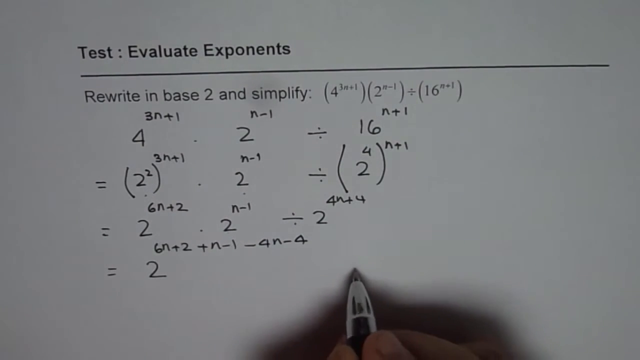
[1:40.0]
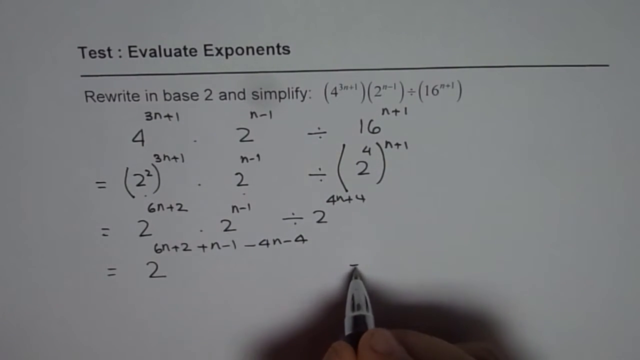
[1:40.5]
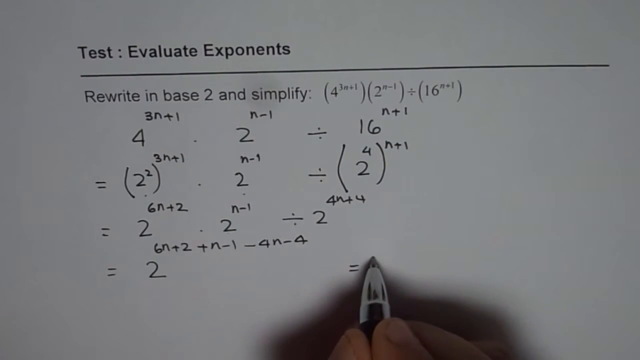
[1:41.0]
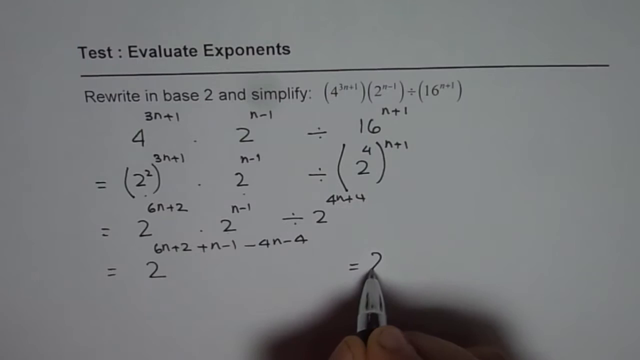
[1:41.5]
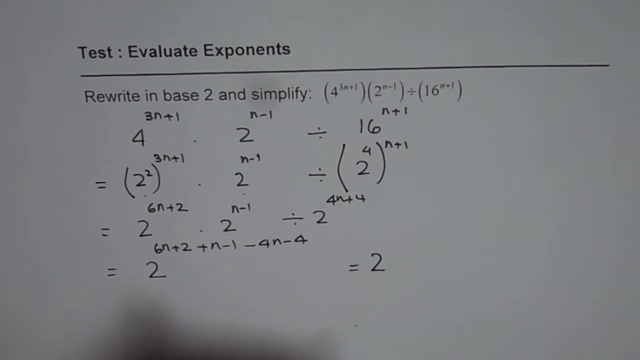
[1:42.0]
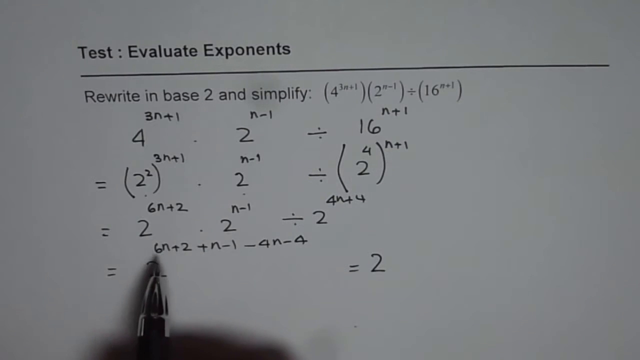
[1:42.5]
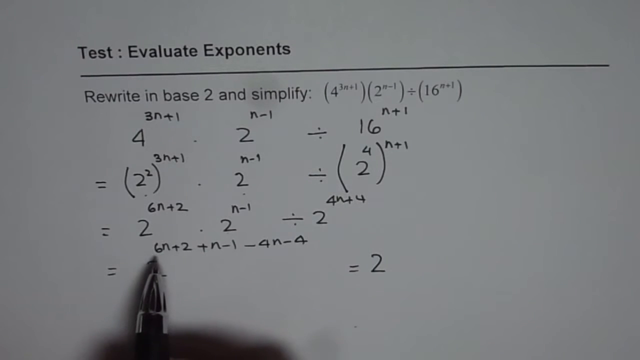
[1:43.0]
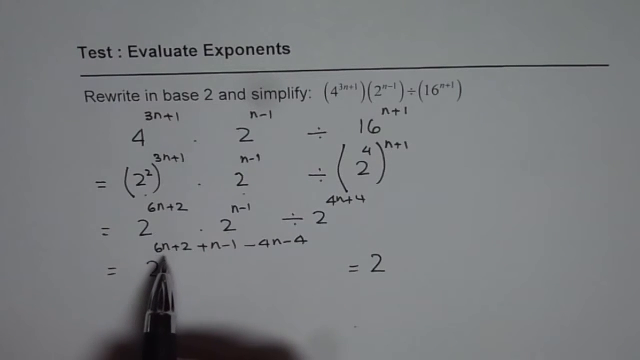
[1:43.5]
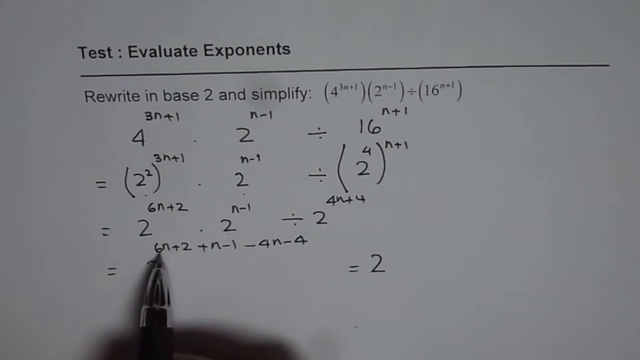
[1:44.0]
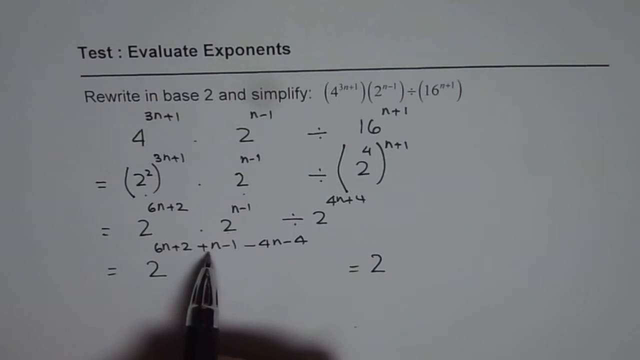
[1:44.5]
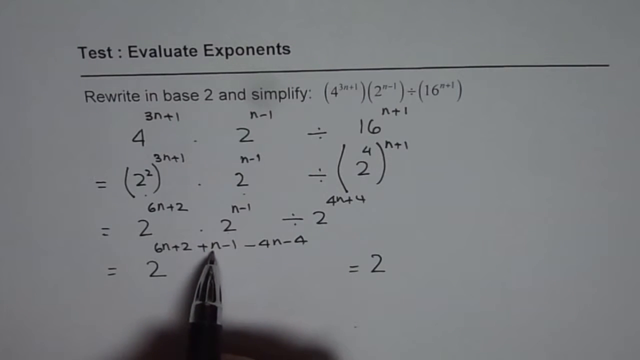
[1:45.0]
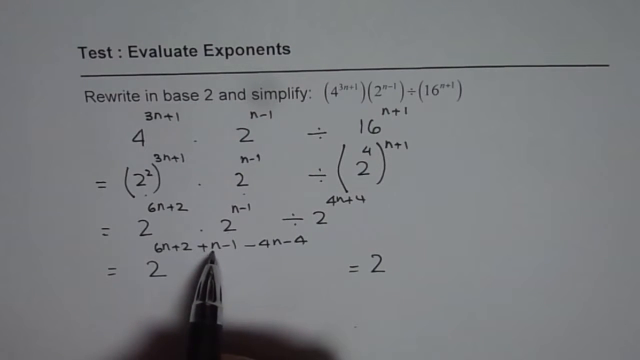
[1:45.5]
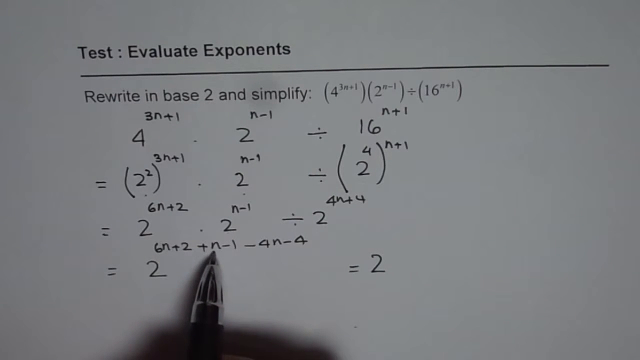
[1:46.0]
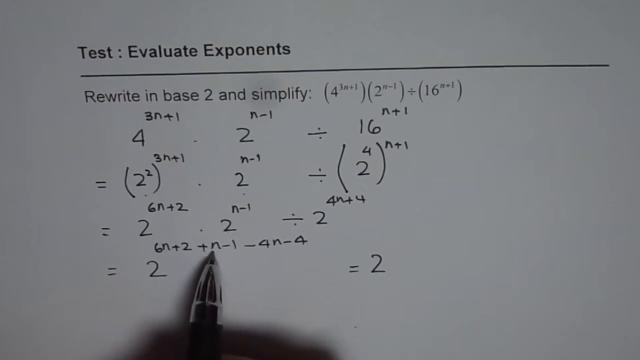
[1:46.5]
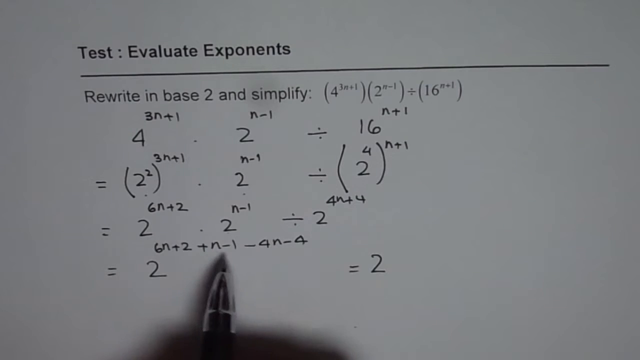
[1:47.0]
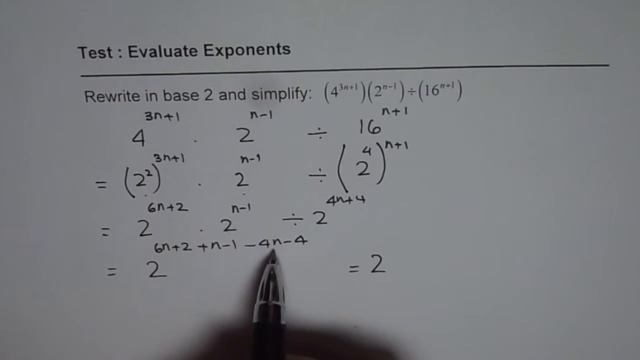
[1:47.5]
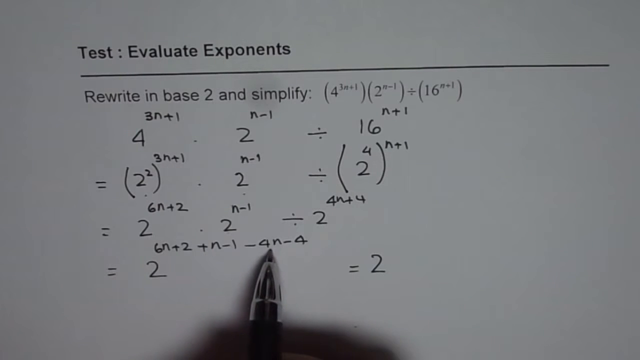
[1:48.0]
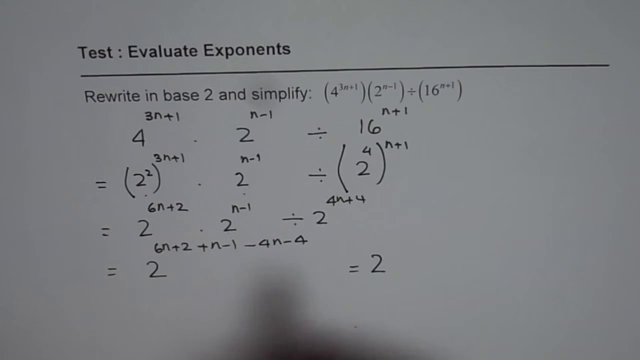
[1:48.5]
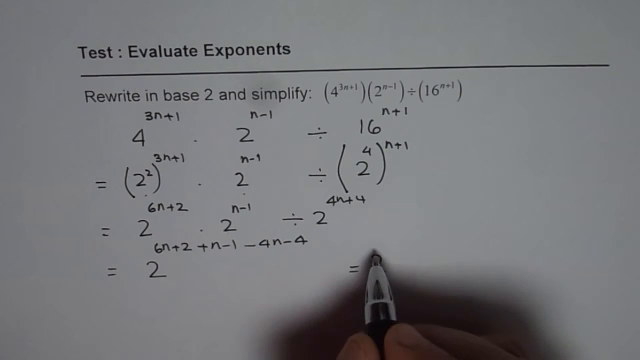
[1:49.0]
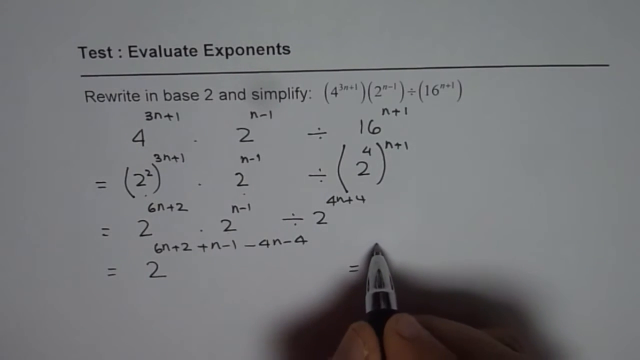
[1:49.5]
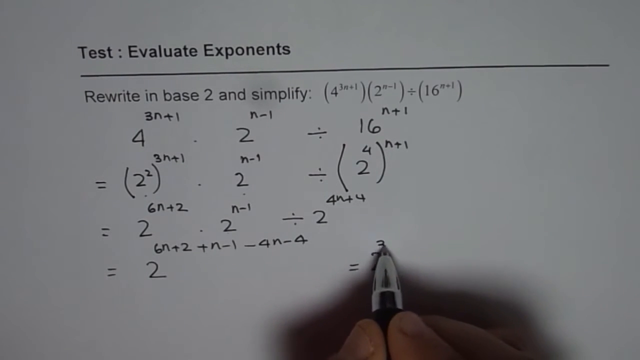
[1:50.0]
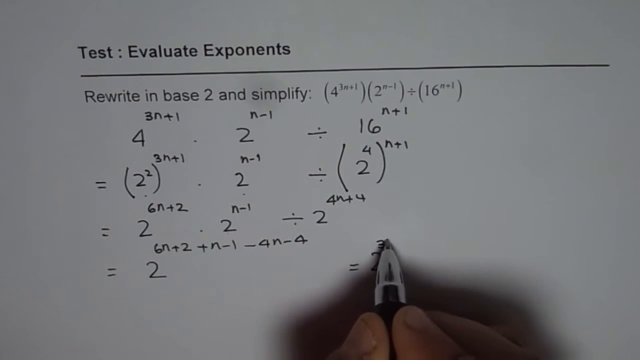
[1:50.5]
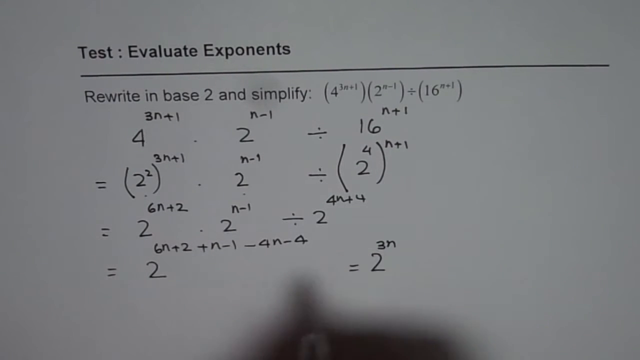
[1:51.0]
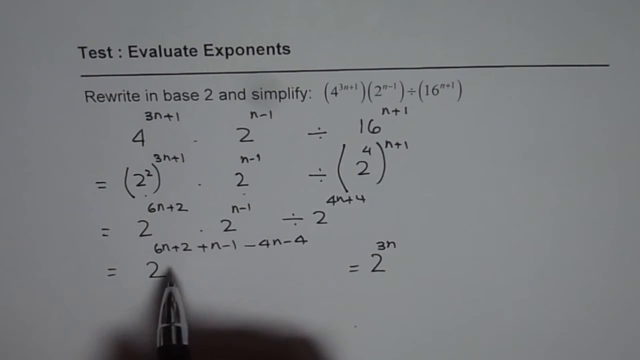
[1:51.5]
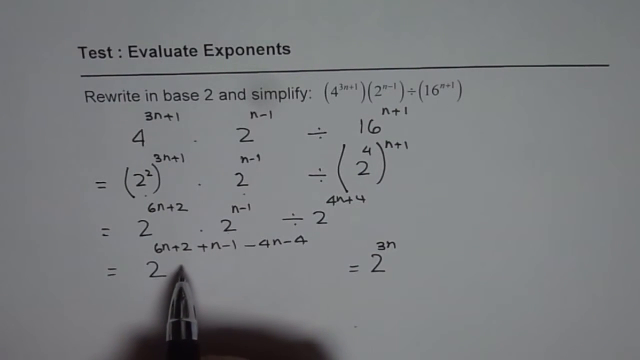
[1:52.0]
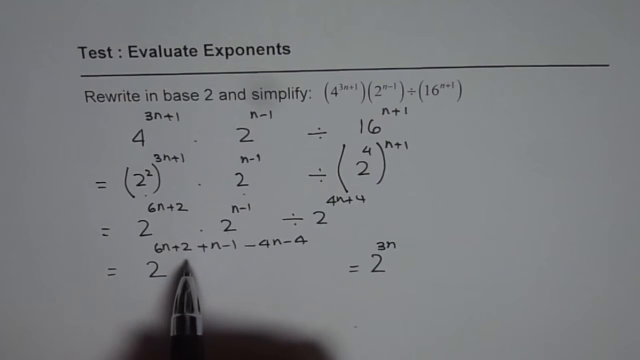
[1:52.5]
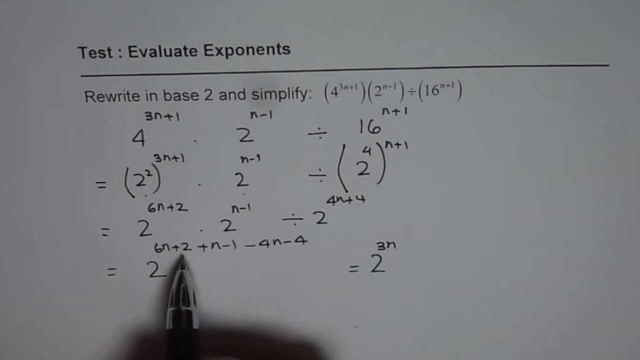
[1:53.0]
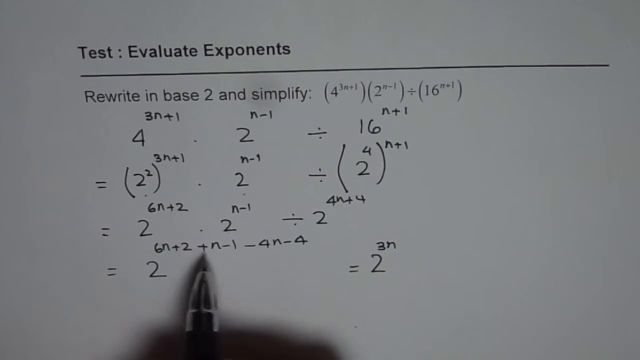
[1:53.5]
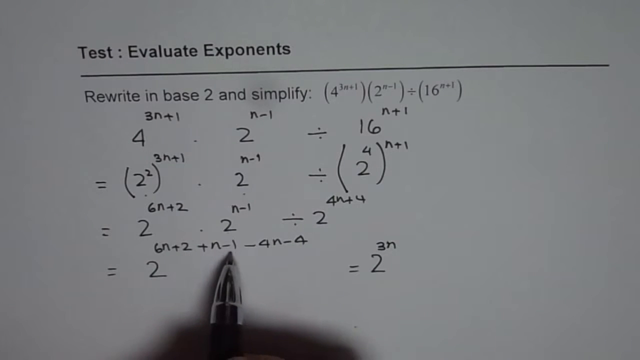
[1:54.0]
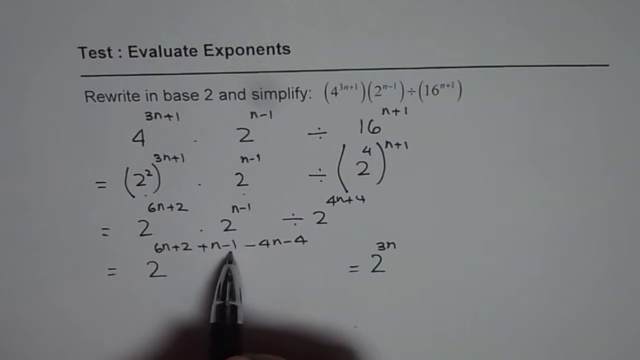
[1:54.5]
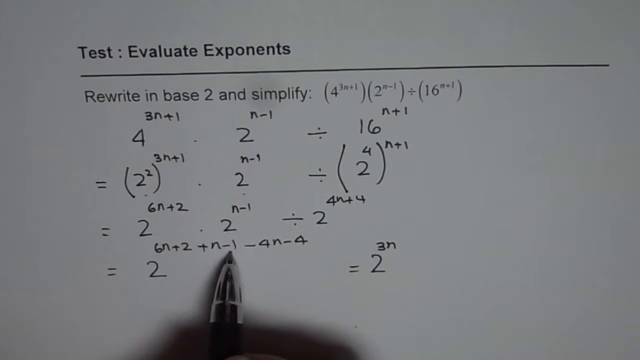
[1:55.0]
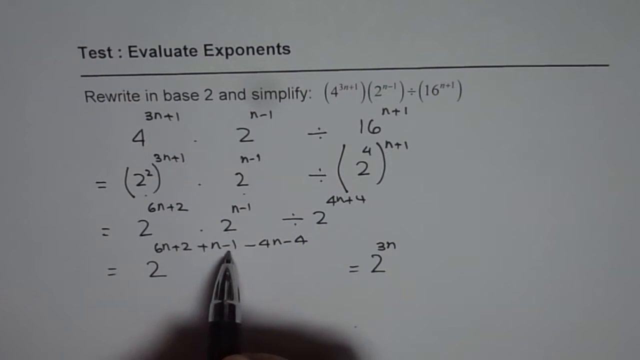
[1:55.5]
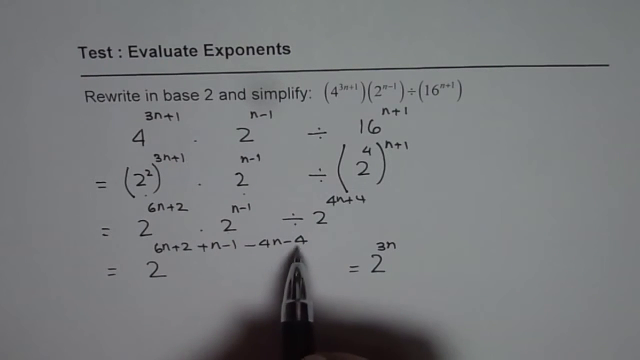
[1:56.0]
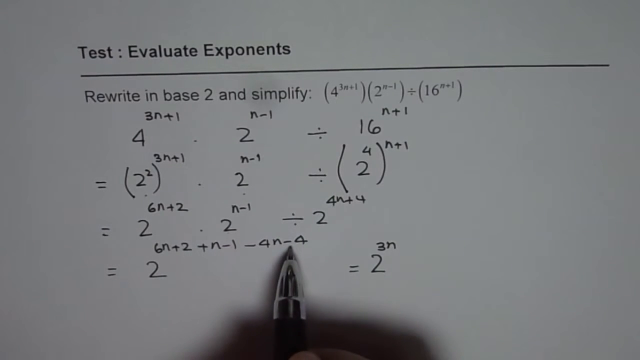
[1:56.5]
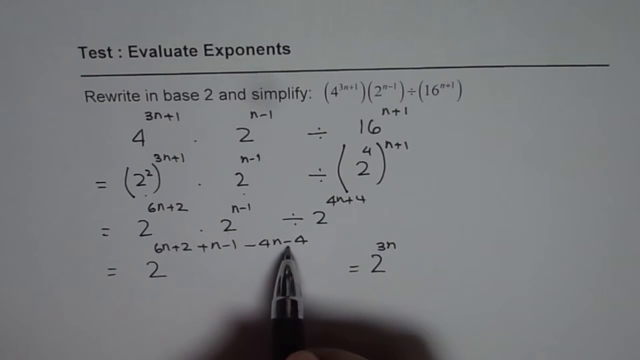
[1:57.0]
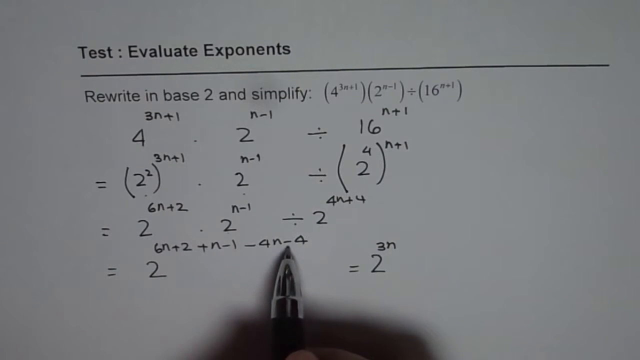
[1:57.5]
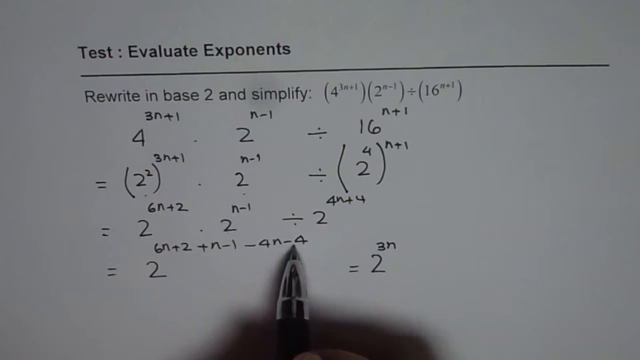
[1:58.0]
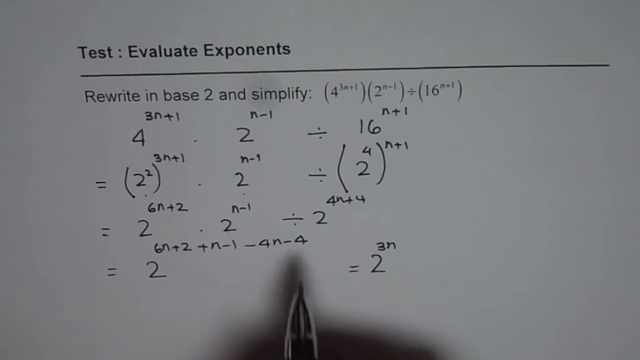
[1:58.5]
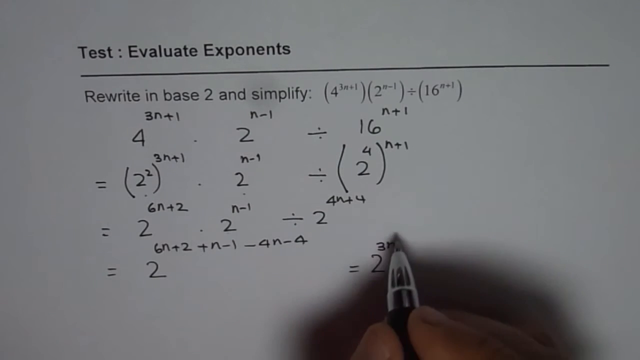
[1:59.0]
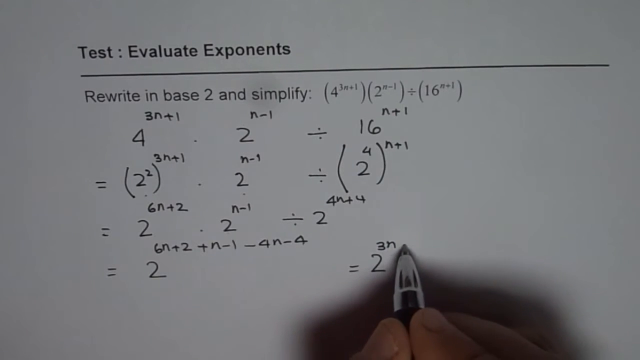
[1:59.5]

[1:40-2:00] A white piece of paper says "test, evaluate exponents," with a white line going across the paper beneath. Under the line, text says "rewrite in base two and simplify," with a formula to the right. At the bottom of the screen, a person holds a black pen with a silver tip in their right hand. They seem to have already written four lines simplifying the formula and are continuing on the fourth line. They write an equals sign with the number 2 next to it, then point at the exponents on the left side of the fourth line. They put the number 3 on top of the 2 they just wrote, point again at the exponents on the left, and continue by writing − 2.